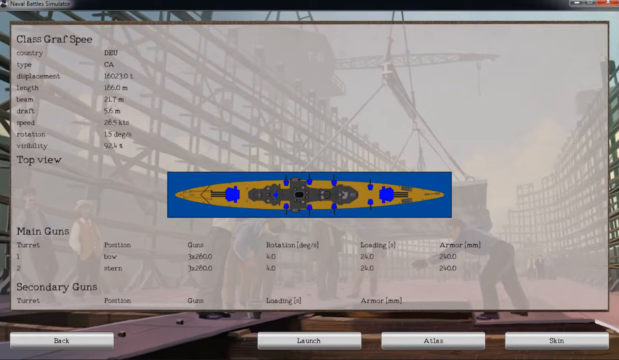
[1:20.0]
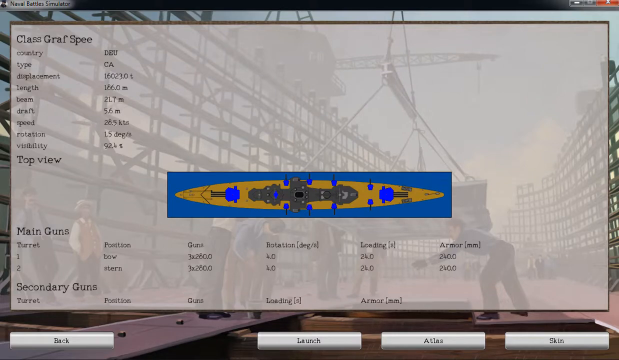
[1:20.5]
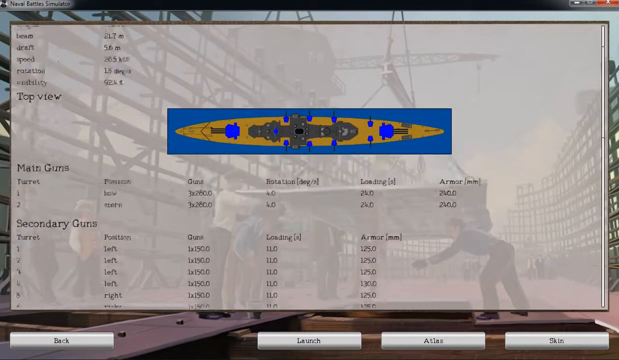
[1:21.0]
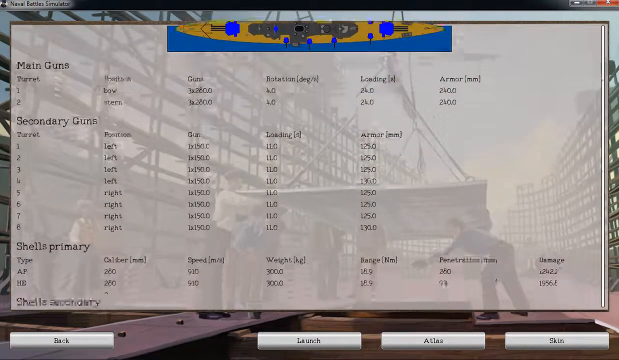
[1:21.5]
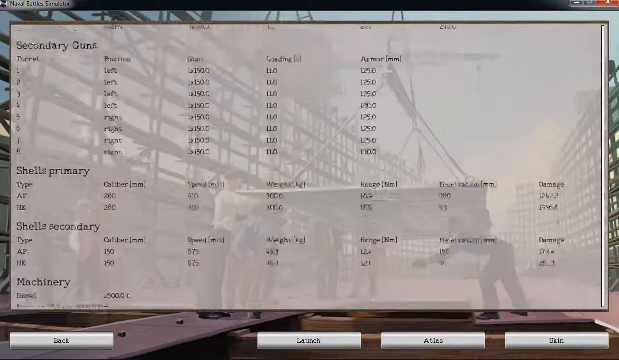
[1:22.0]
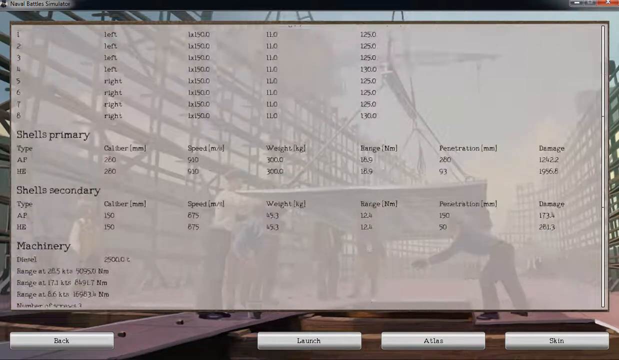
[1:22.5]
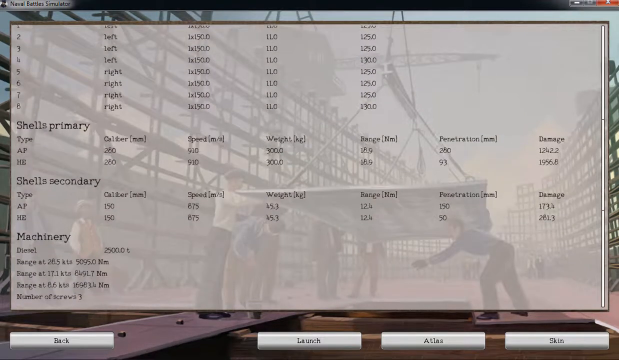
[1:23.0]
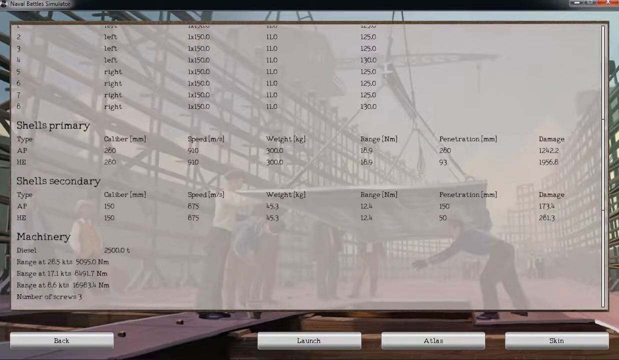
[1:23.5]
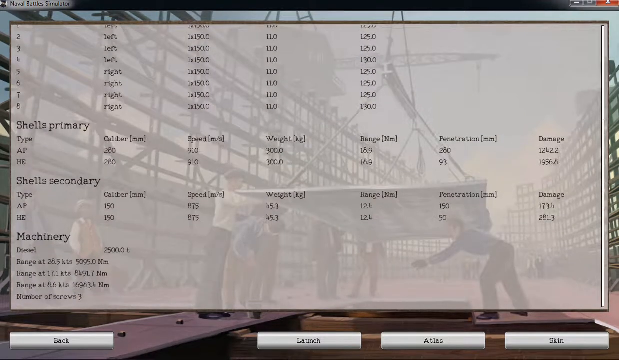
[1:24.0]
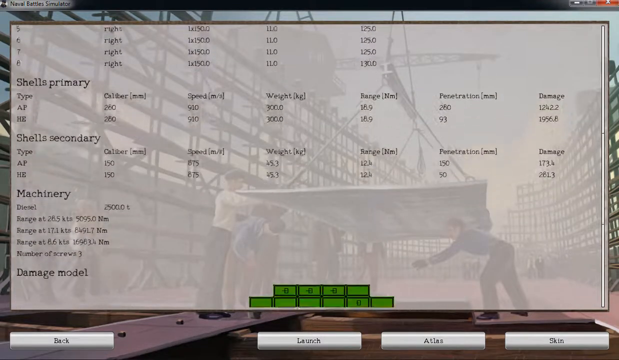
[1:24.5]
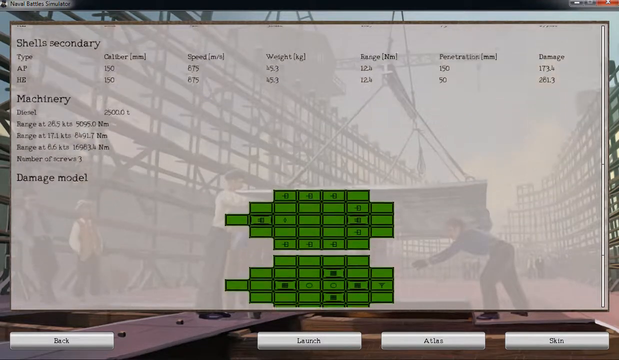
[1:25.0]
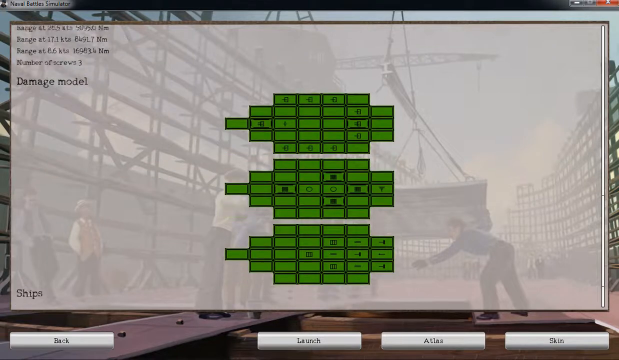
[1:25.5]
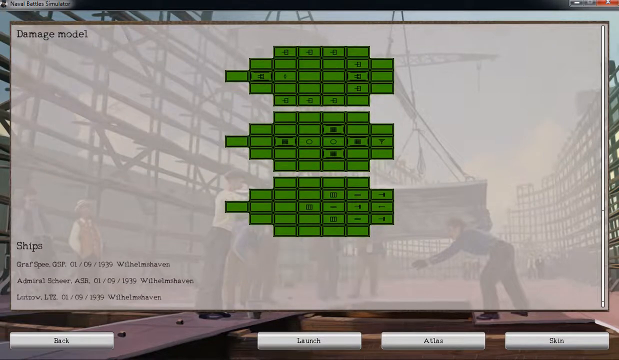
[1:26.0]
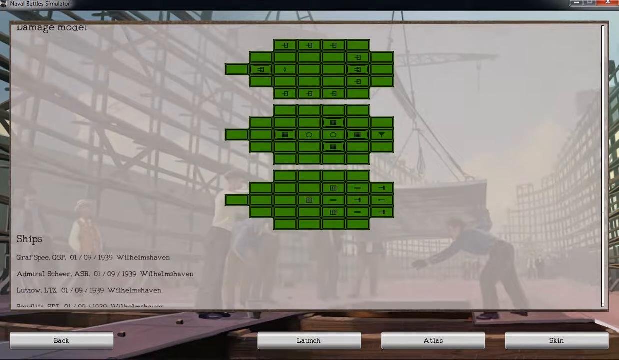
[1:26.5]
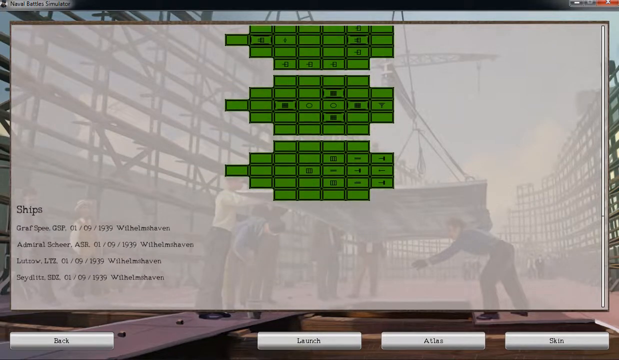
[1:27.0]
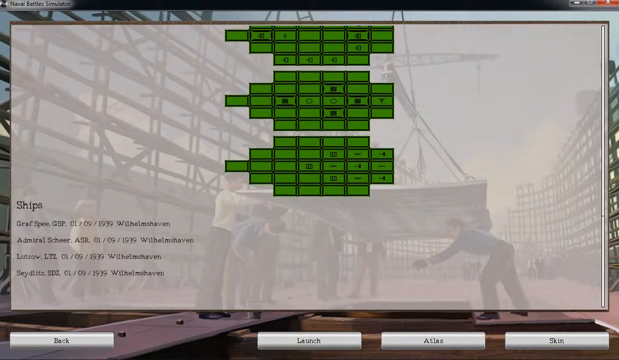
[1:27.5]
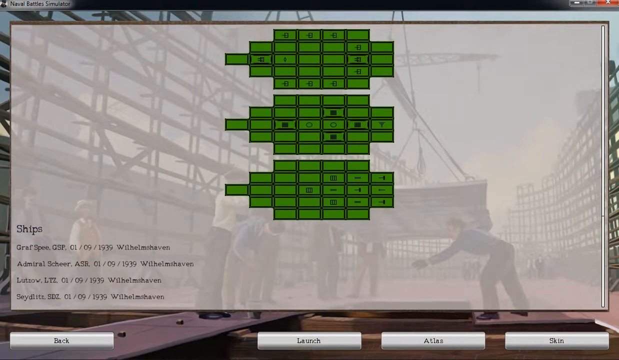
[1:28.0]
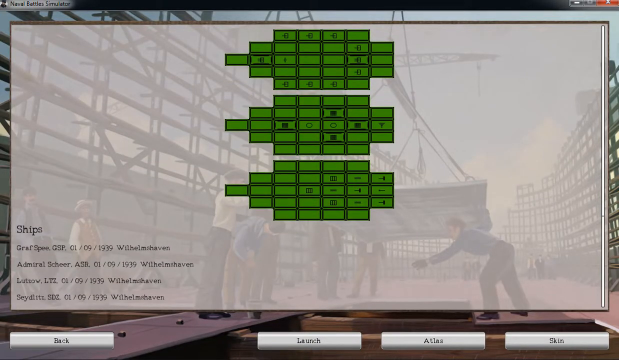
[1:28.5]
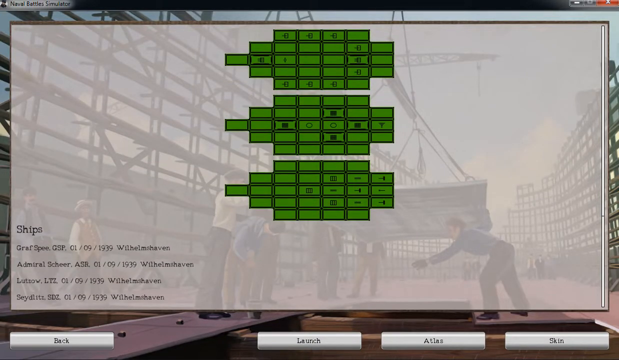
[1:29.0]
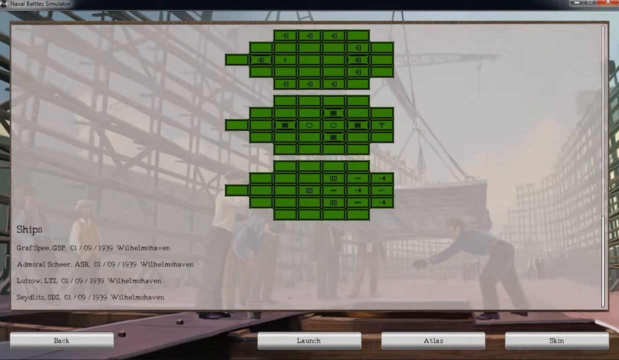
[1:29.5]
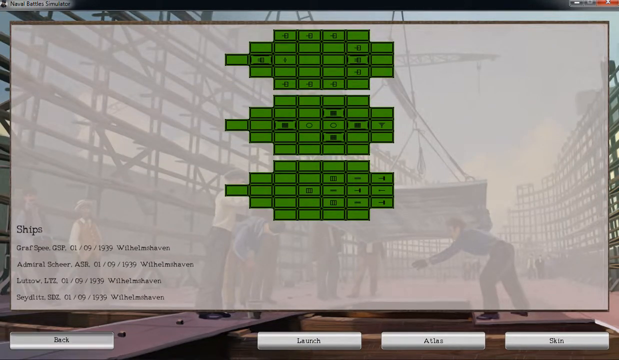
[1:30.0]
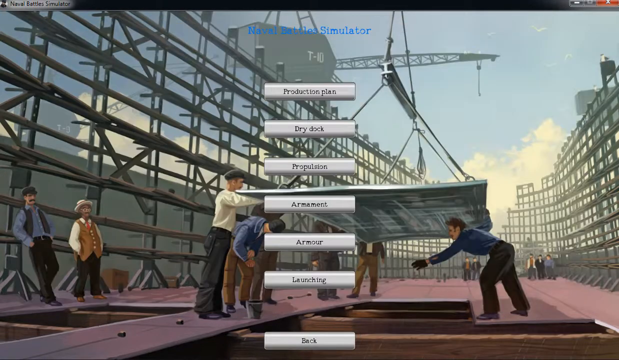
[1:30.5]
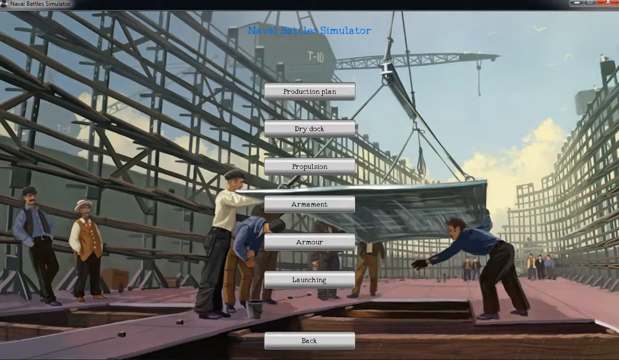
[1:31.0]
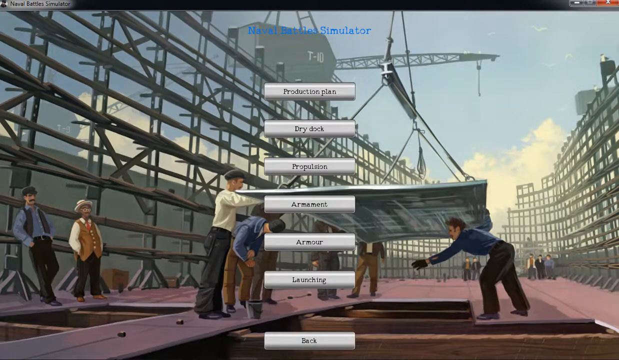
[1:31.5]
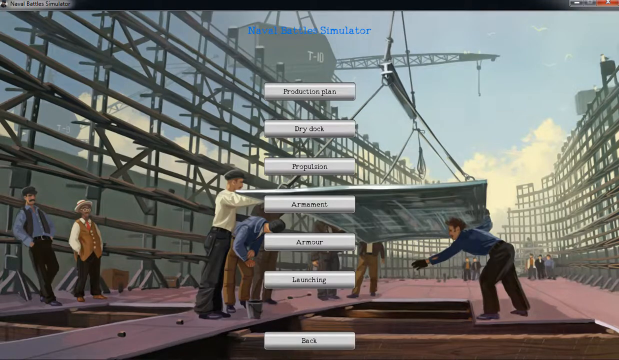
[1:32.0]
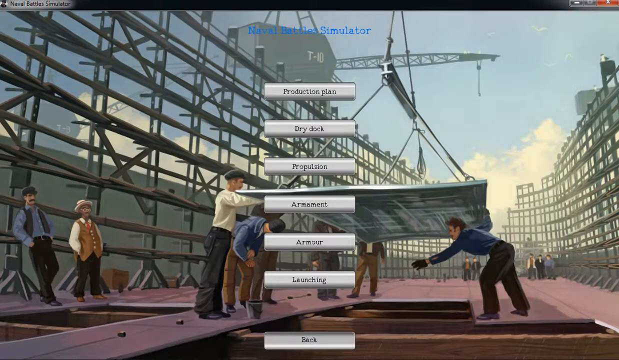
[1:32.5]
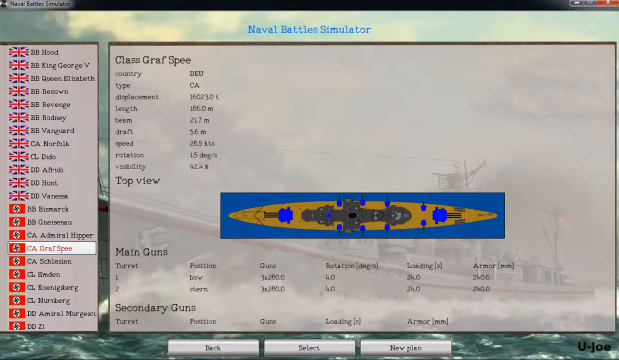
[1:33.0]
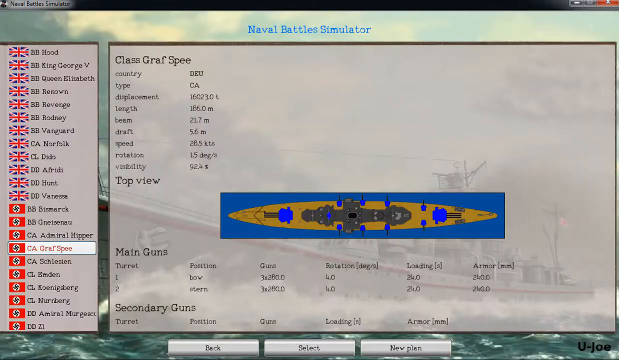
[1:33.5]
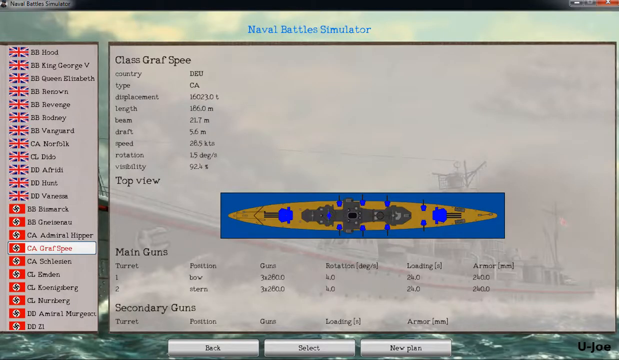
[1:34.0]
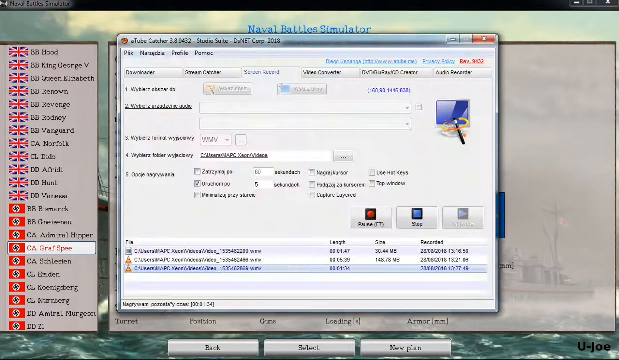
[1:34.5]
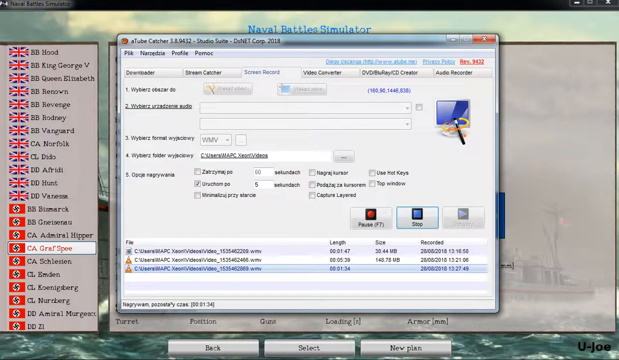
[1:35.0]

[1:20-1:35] The computer screen shows the rectangular shape of the boat on a gray background, with the people working on the boat. The person pulls up a whole bunch of different things on the computer. Three large green structures made of rectangular structures are being put together. The outline of the boat is at the bottom and the different flags are off to the left, including the European flag and the Russian flag. He pulls up a gray screen and then the blueprint of the boat, a very large boat that looks like a Navy ship. The blueprint is all yellow, with something big and blue at the top and at the bottom, a blue background, and gray in the middle. The people working on it are in the background. He pulls up a bunch of numbers and words in black letters, and something at the top says "ships, product Naval battle simulator."